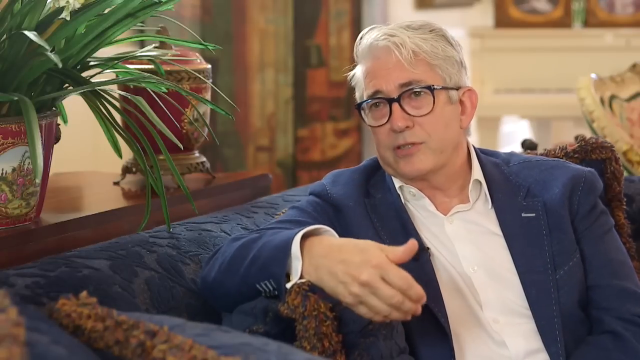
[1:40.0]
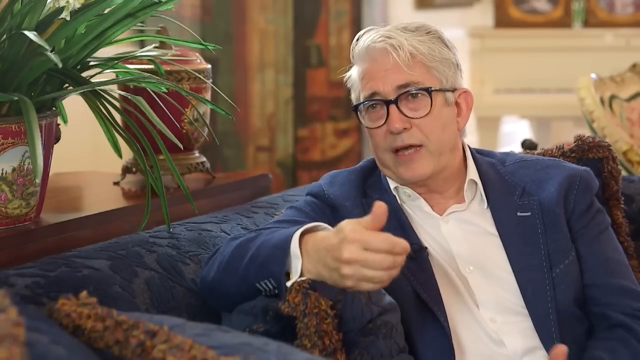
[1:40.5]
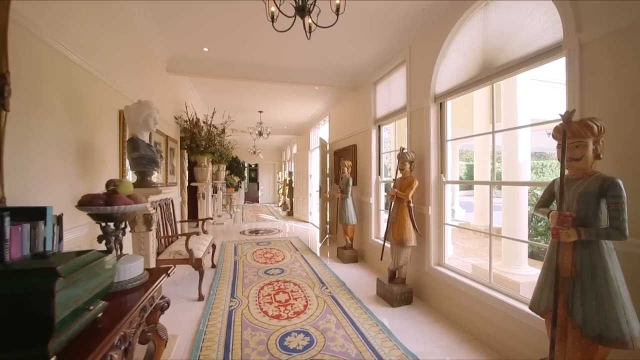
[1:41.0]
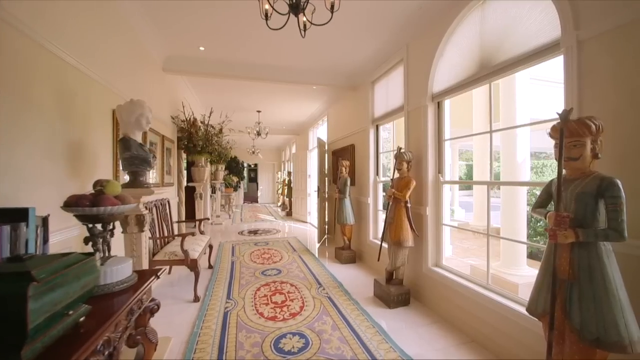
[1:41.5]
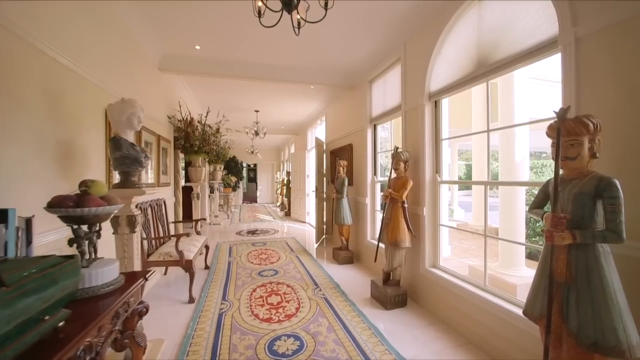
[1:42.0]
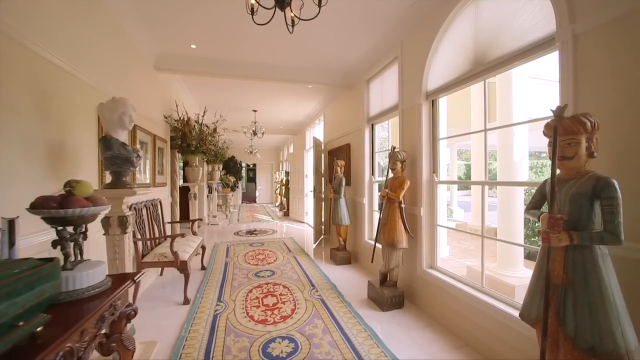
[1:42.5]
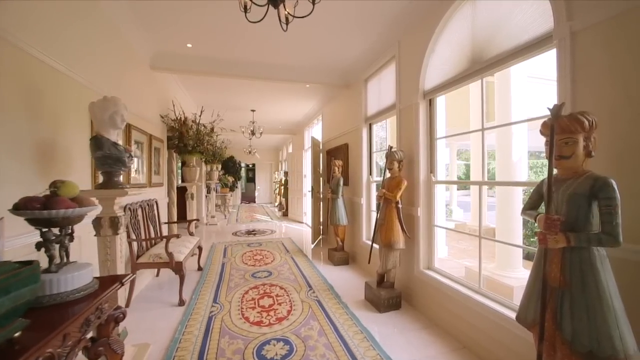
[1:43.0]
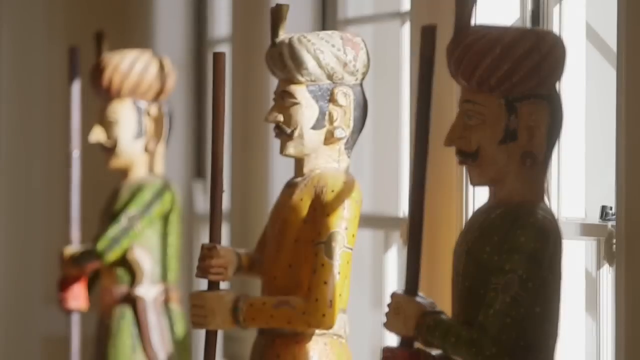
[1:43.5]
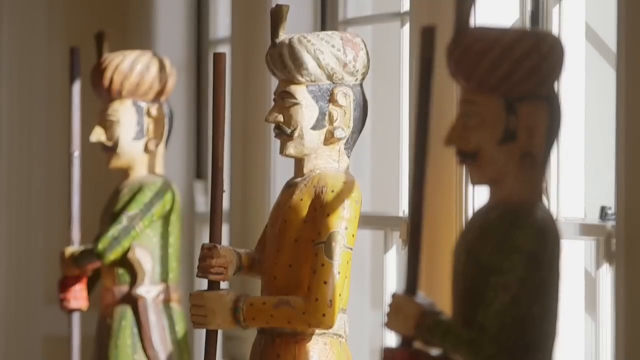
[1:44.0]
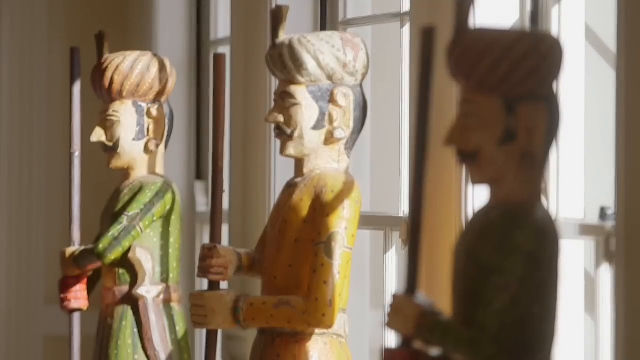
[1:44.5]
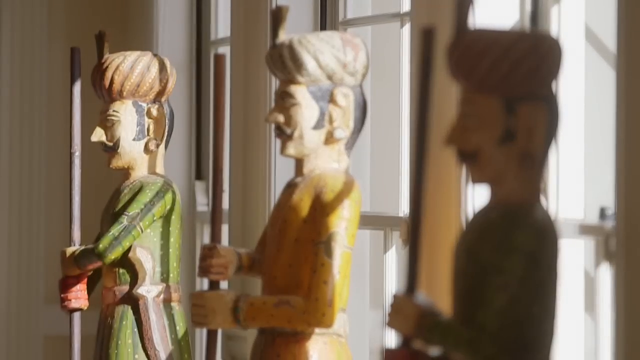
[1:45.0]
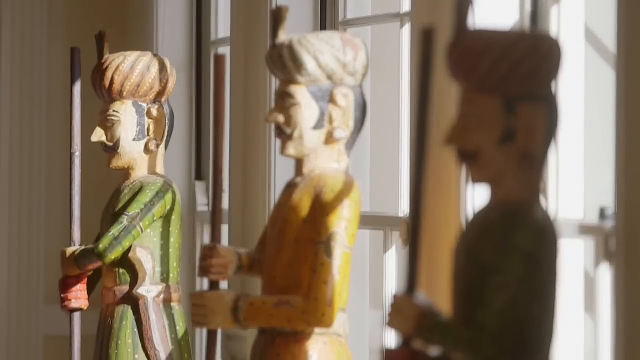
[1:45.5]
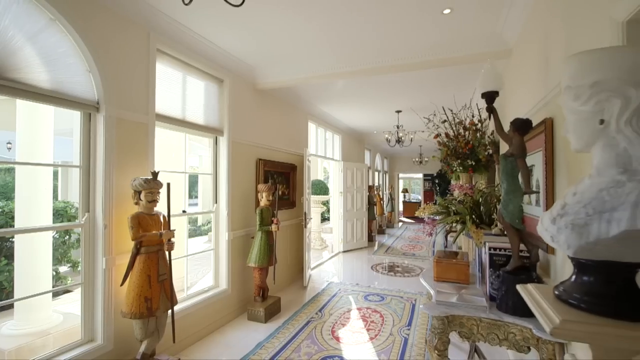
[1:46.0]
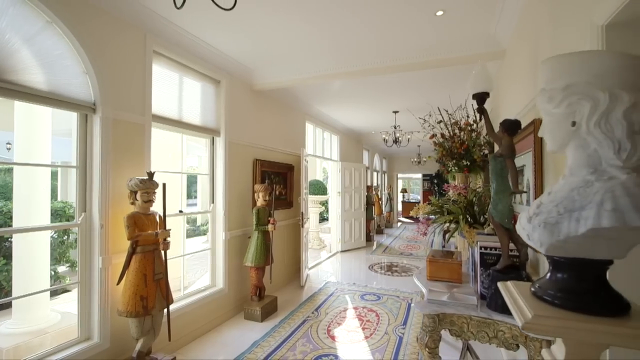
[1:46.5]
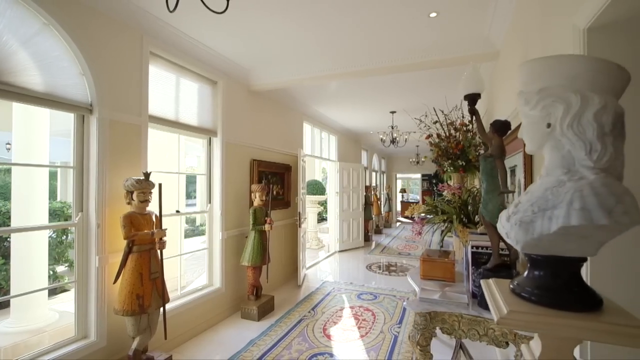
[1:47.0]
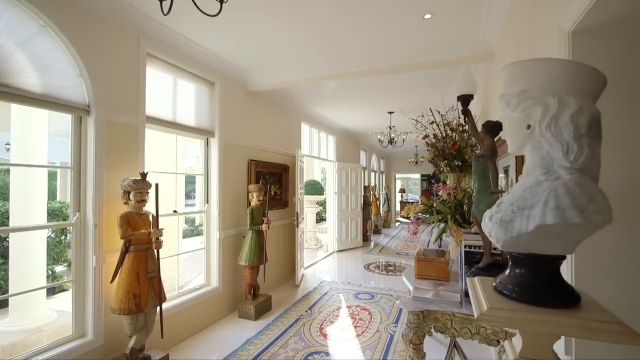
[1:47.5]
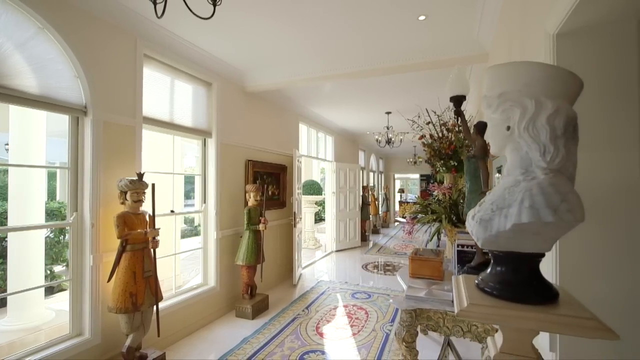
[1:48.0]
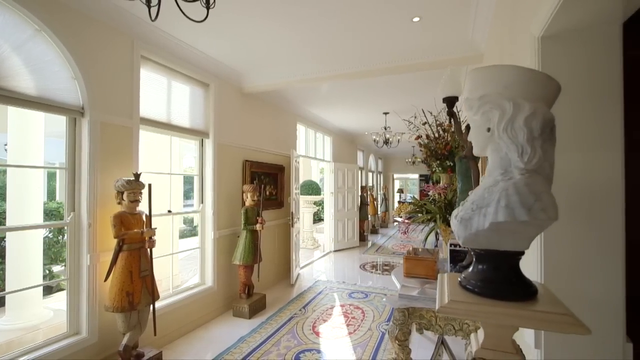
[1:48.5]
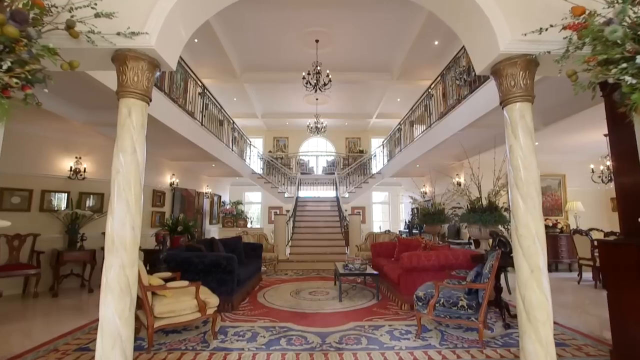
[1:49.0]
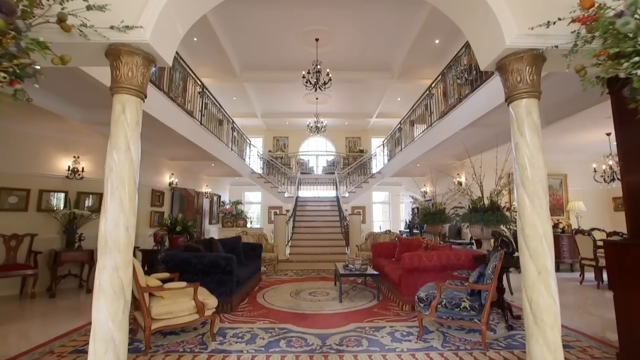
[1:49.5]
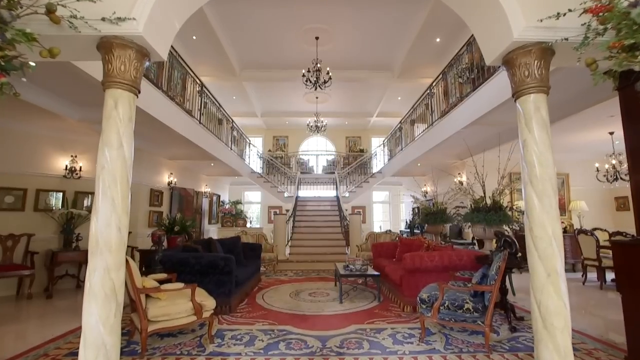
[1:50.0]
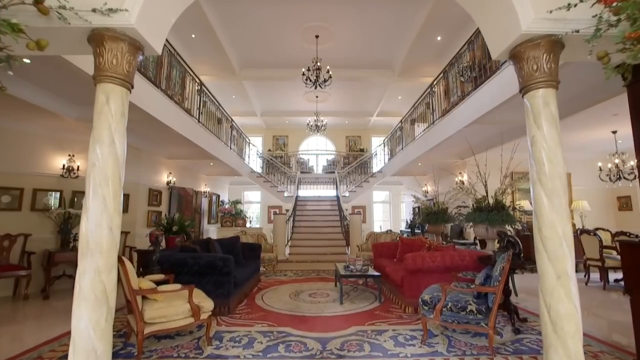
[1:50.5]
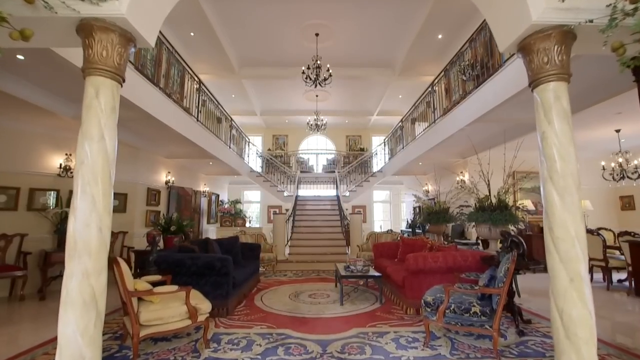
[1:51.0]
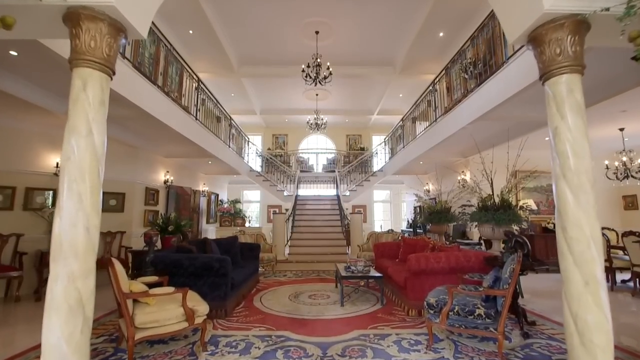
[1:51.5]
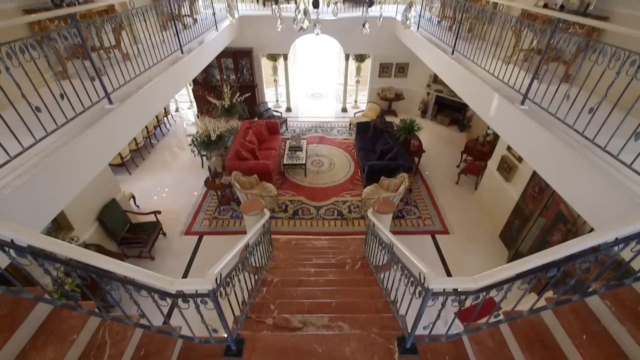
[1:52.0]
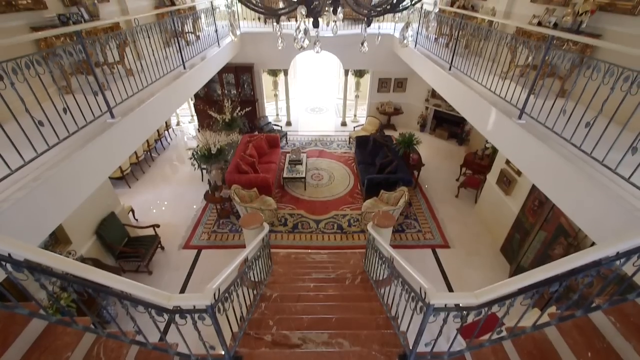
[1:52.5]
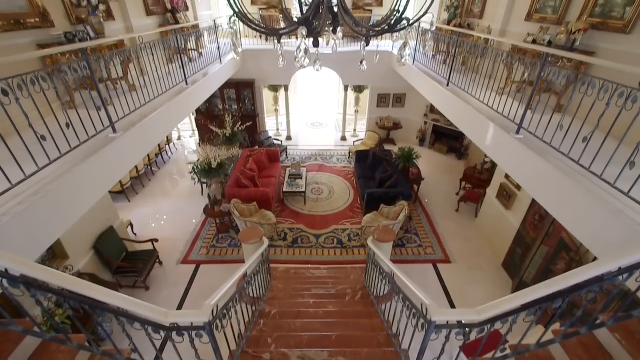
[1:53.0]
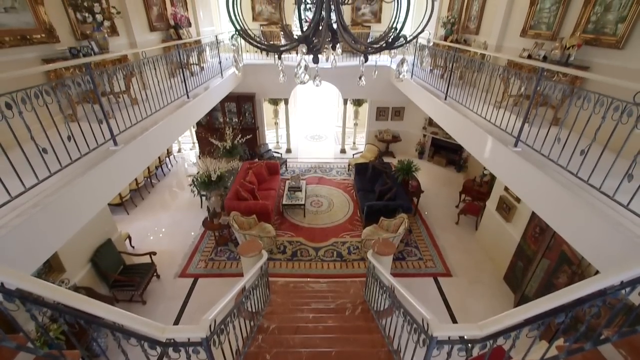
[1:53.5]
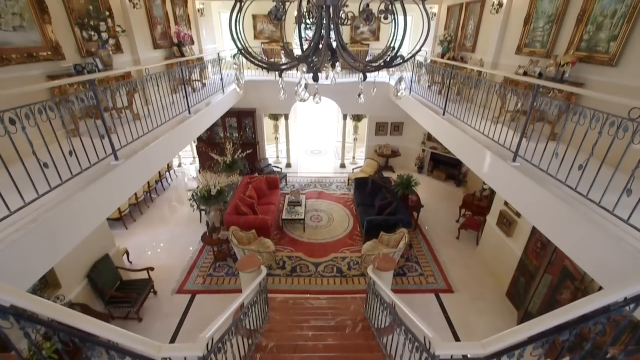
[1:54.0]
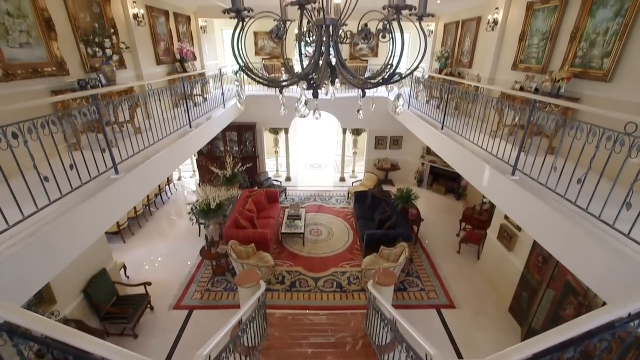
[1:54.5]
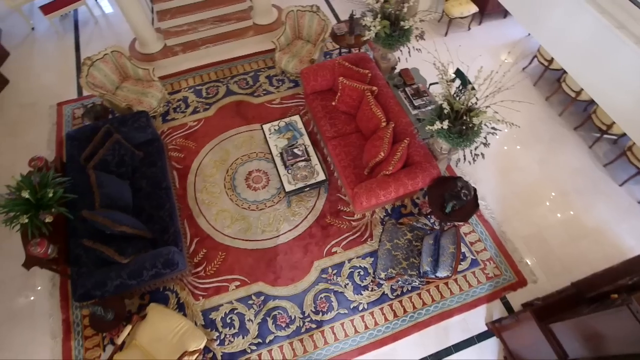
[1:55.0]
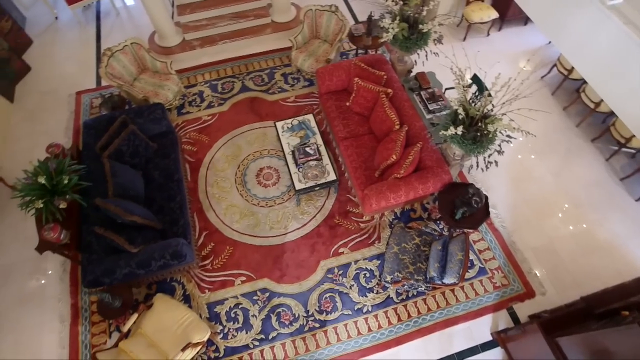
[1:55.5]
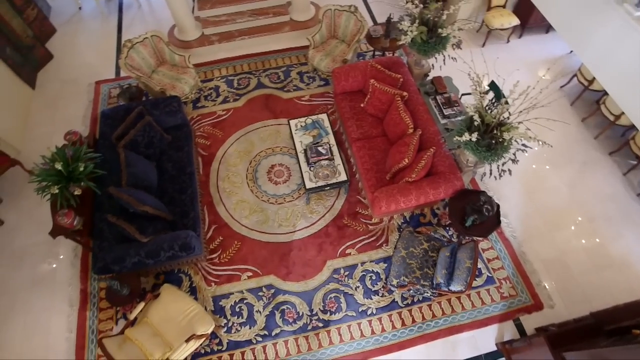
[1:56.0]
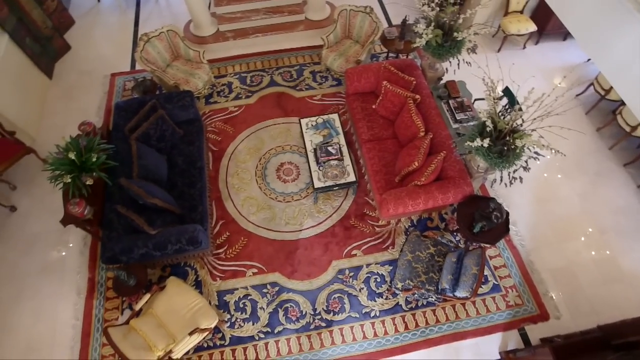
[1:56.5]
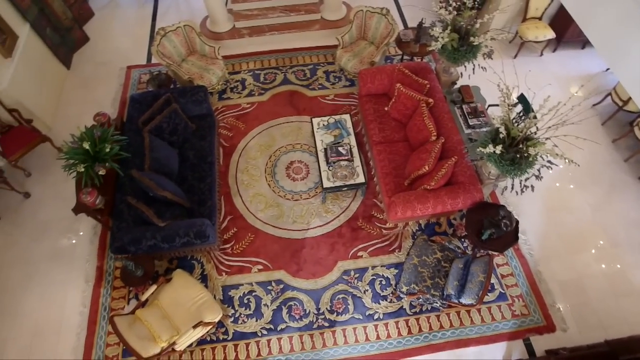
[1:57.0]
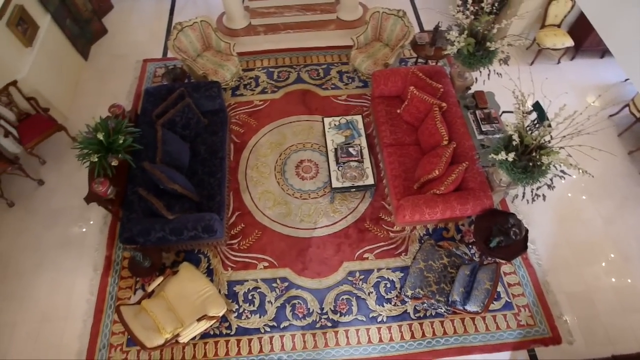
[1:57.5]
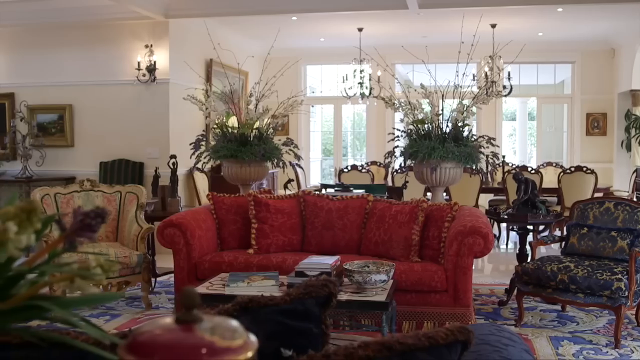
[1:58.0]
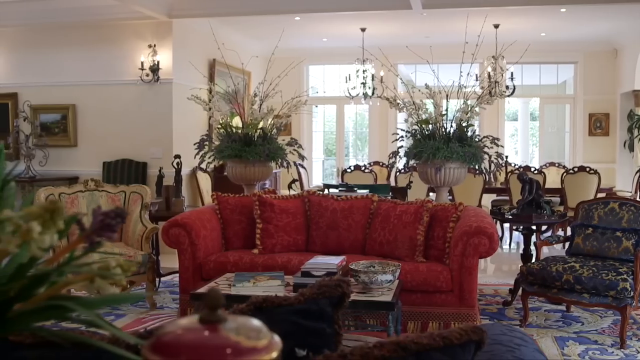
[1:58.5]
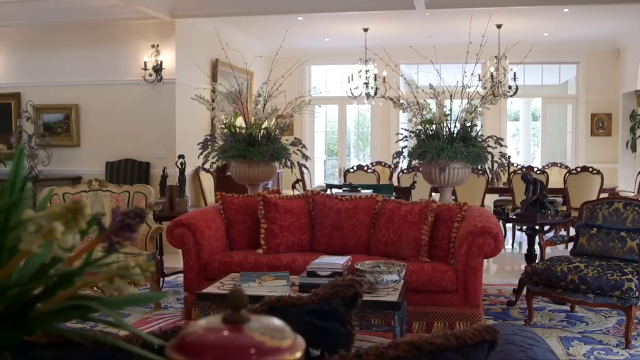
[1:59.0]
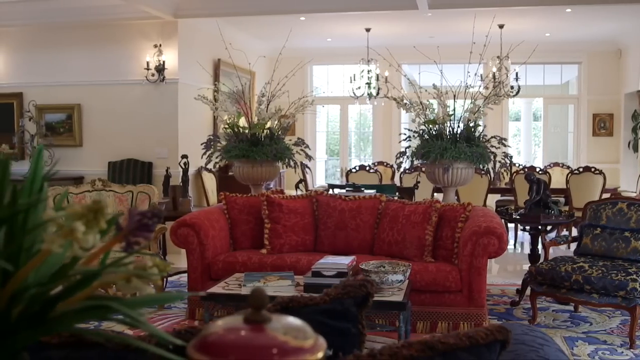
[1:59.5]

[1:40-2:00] The staircase of the two-story building is shown again, with the camera almost on the floor of the first stair. The camera looks up the stairs and moves from stair to stair up to the second floor, past barricades. It turns around the staircase for a closer view of the steps, then points up at the top ceiling. From the second floor it shows the ground floor, with a blue couch and a red carpet. There are many different flower decorations, and the place seems to be filled with flowers. The TV room with white walls and the picture of a lady with yellow hair on the wall, and the tables with wooden tops and wooden chairs, are shown again as the camera zooms away from the house to the outside and shows the swimming pool, then transitions back to the interior with the wooden chairs. The video shows furniture around the house and what look like decorative statues of Indian men. The camera zooms away from them to show different top views of the house, and a closer look shows courtyards of Indian design.